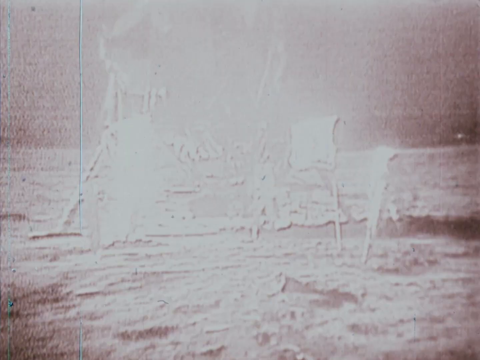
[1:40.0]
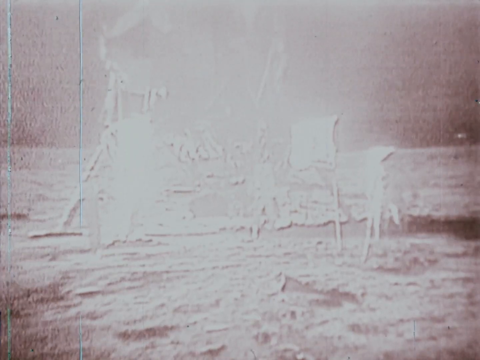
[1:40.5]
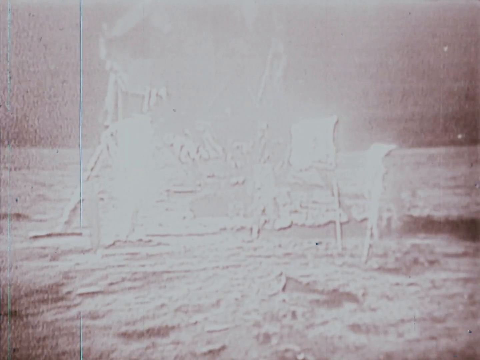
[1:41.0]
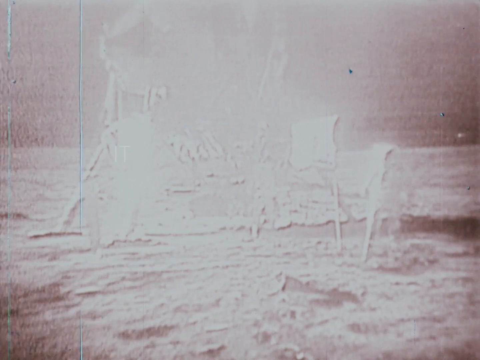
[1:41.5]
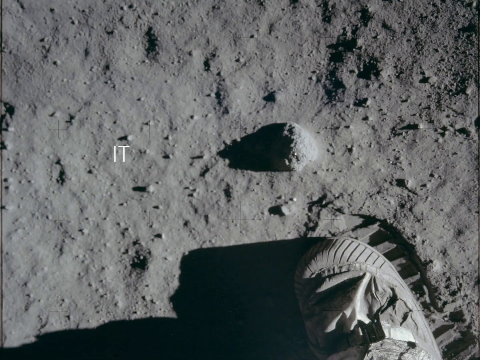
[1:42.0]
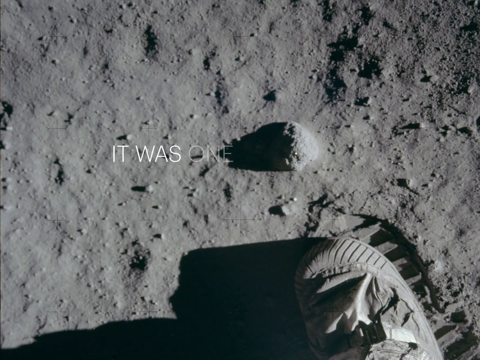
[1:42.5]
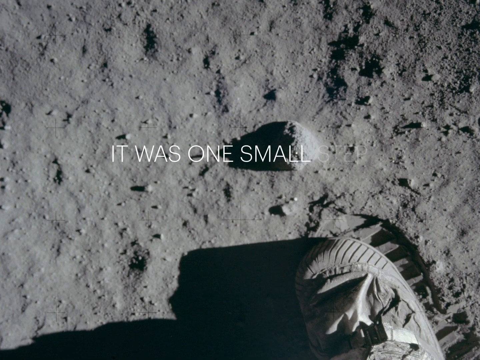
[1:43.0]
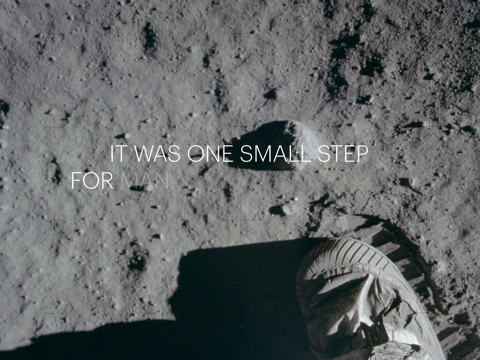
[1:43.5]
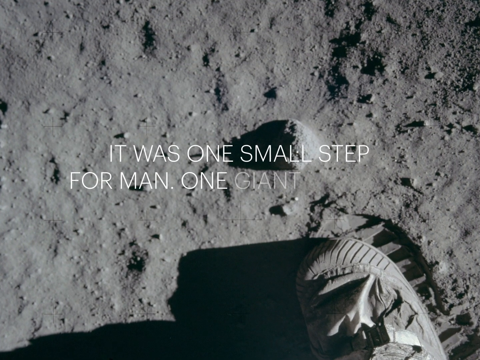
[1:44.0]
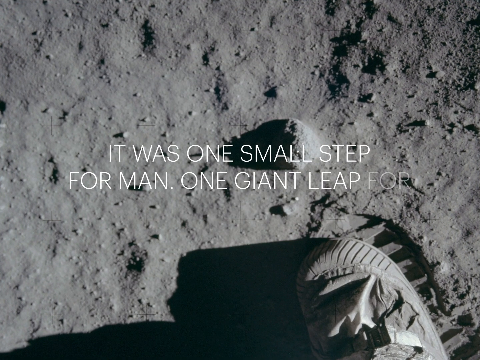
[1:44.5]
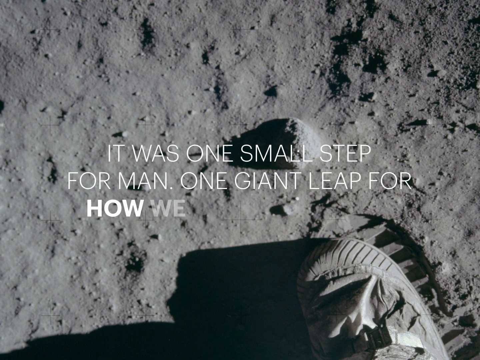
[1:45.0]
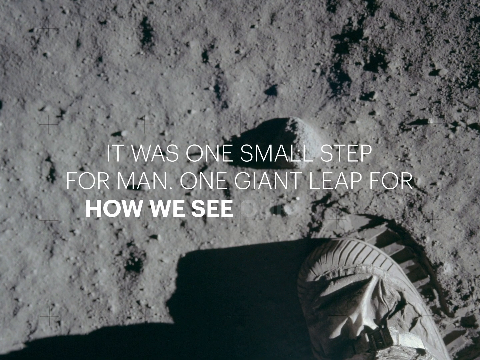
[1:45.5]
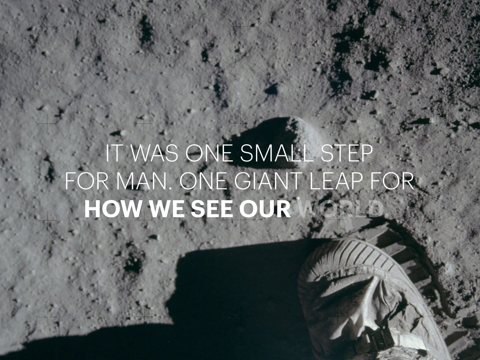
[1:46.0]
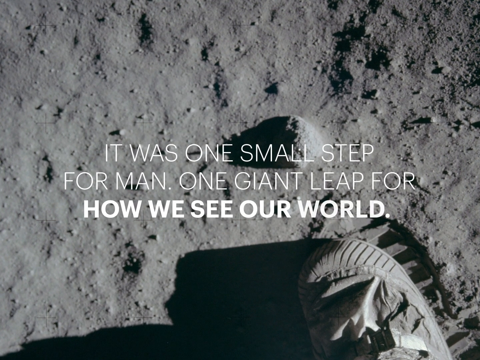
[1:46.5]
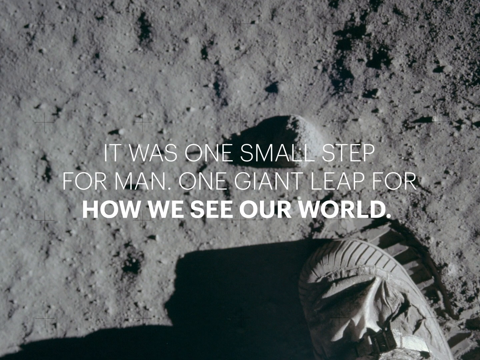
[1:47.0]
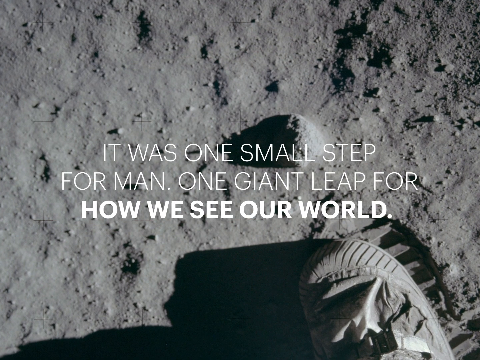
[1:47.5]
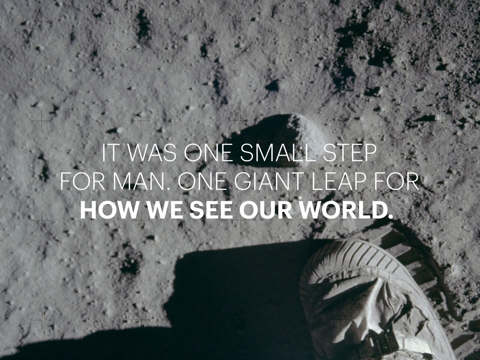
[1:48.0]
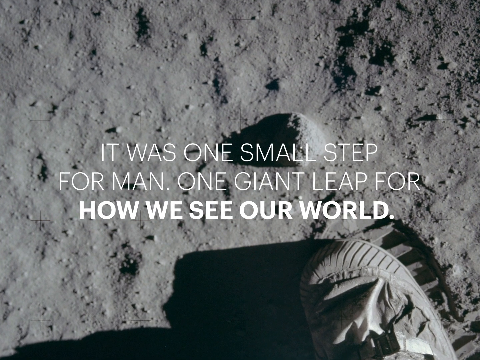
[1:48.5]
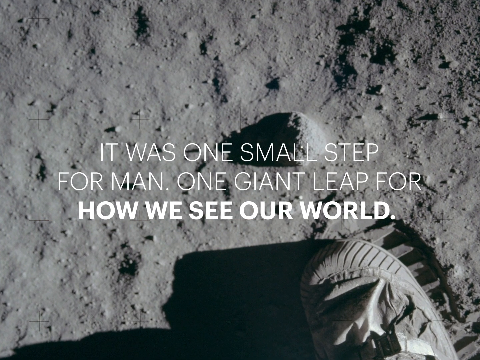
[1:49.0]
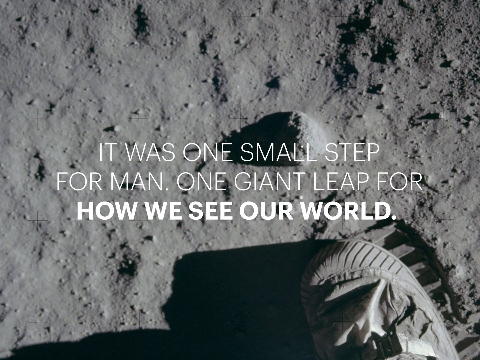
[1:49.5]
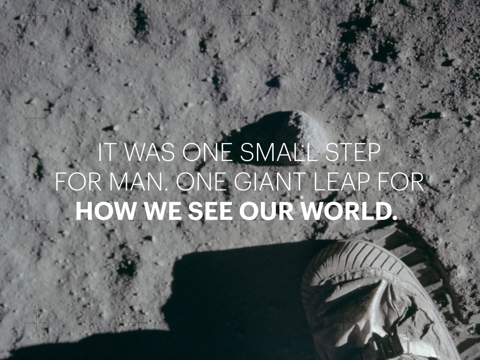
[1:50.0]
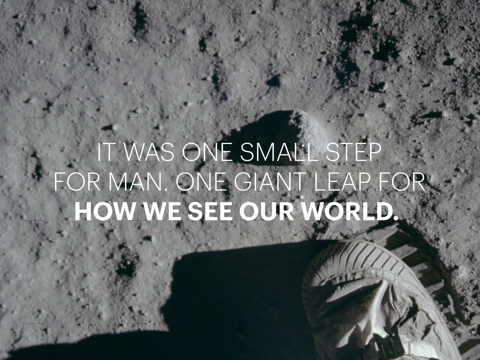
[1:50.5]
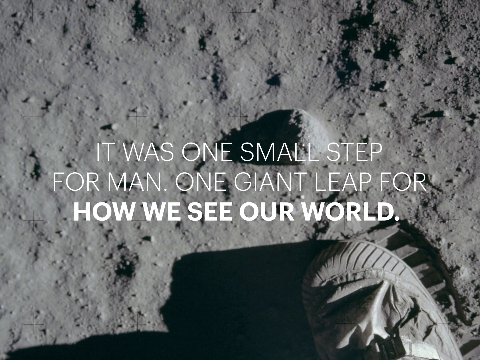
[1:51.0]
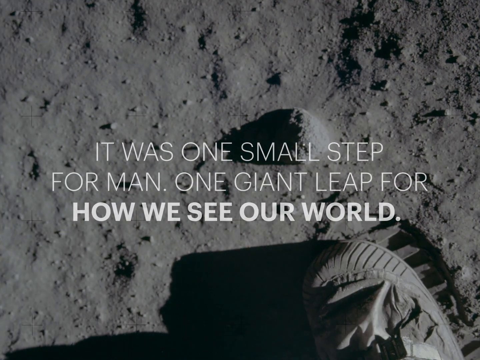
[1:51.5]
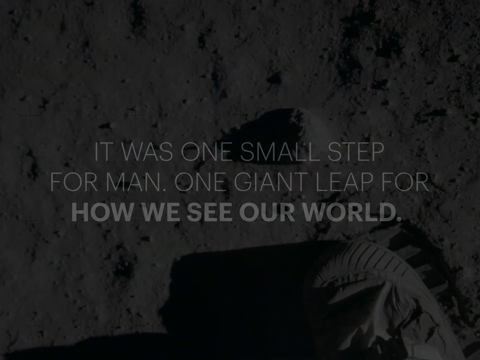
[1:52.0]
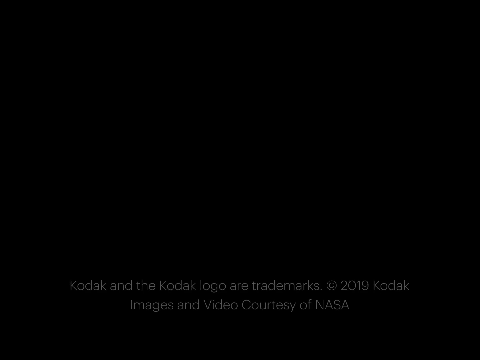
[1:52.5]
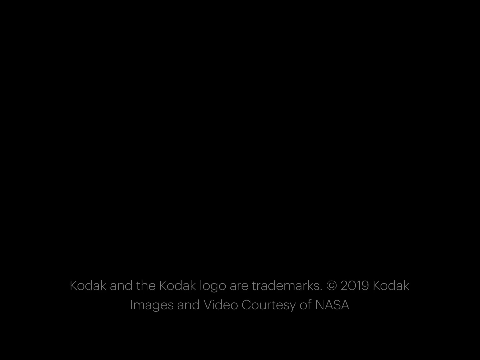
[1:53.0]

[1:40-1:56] An infrared video shows what looks to be the moon landing. A close-up picture shows a dirt surface with a white boot next to it, and the words "it was one small step for man, one giant leap for how we see our world" appear in the middle. The screen then turns black, and white text at the bottom center reads "Kodak and the Kodak logo are trademarks 2019 Kodak images and video courtesy of NASA." The video is in a square shape, there are no animals in it, and most of the pictures and videos show a good amount of natural and artificial light, keeping everything clear and visible.